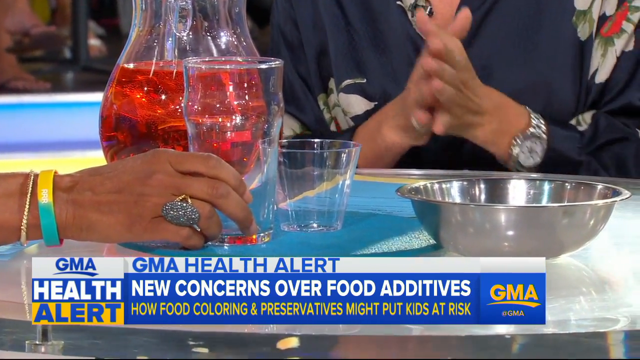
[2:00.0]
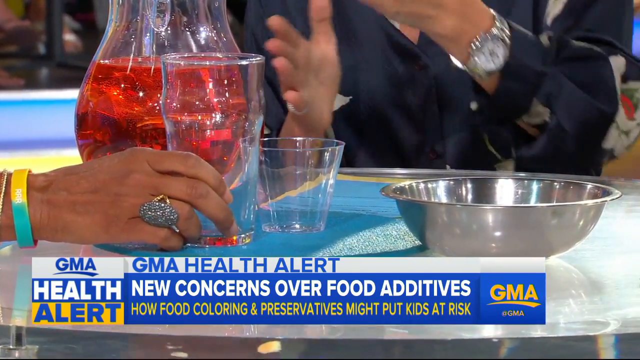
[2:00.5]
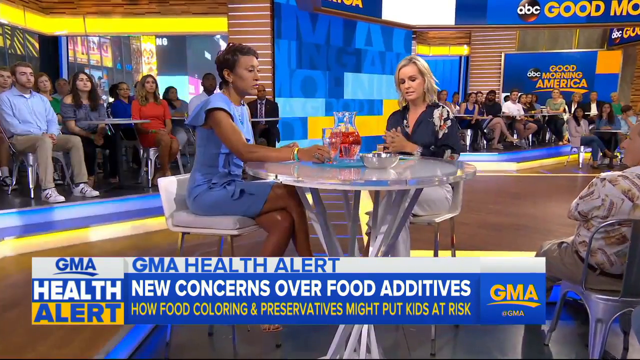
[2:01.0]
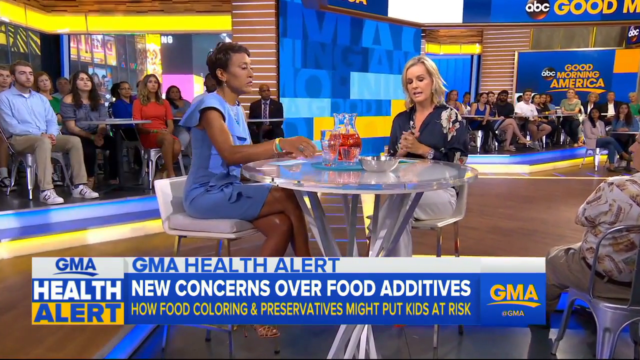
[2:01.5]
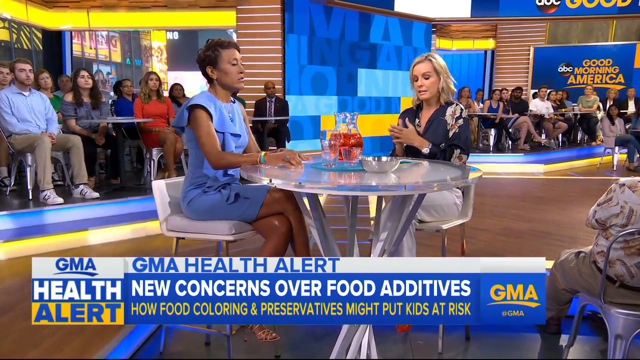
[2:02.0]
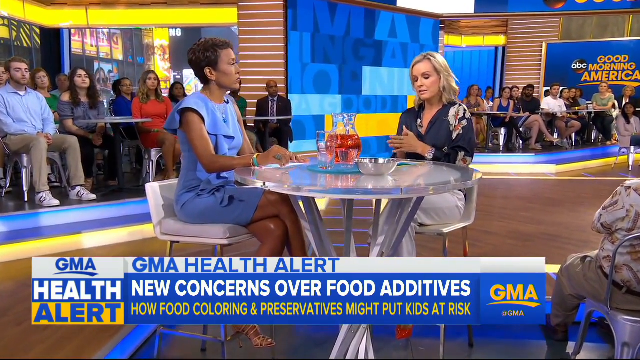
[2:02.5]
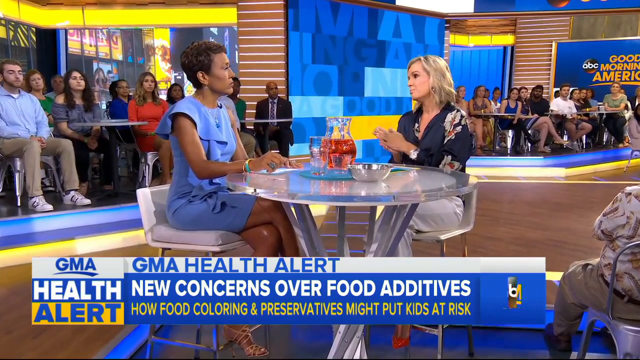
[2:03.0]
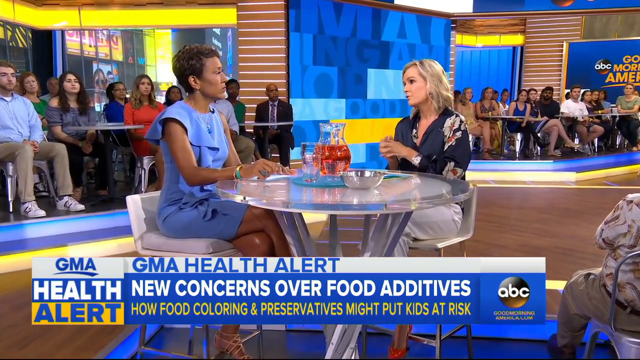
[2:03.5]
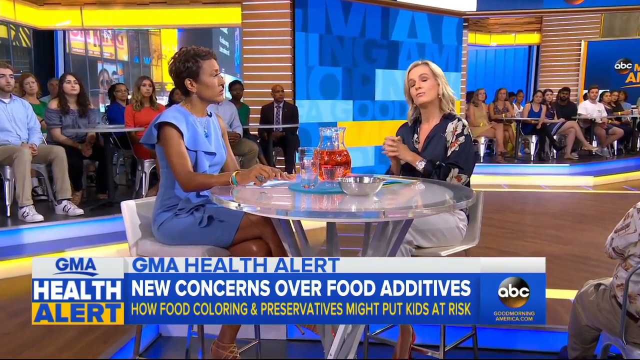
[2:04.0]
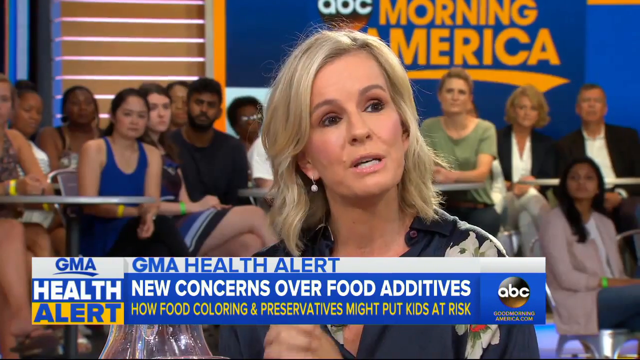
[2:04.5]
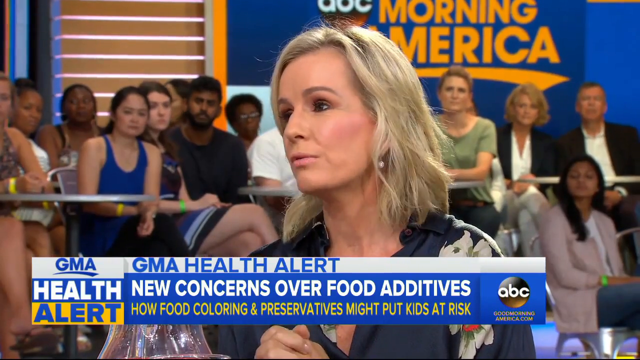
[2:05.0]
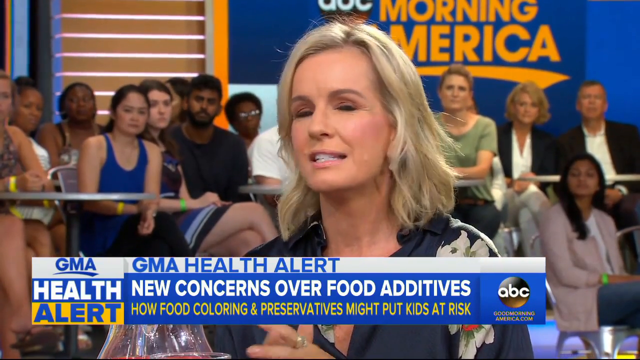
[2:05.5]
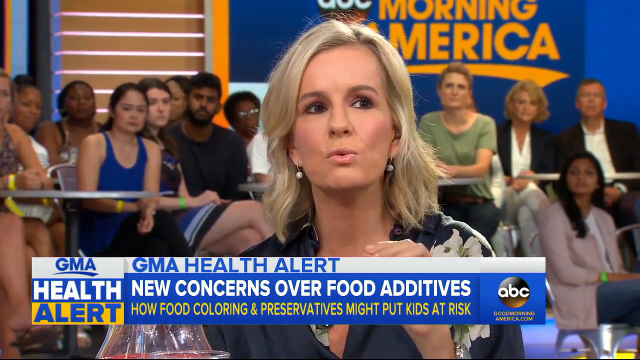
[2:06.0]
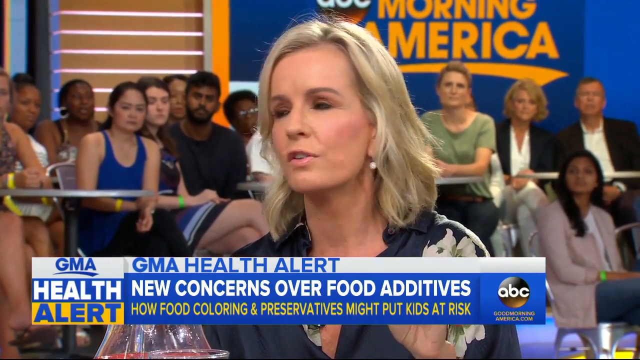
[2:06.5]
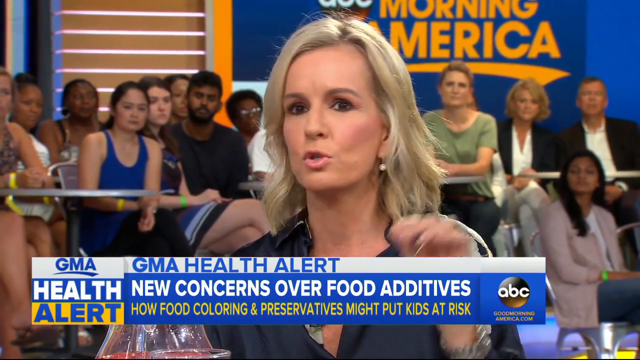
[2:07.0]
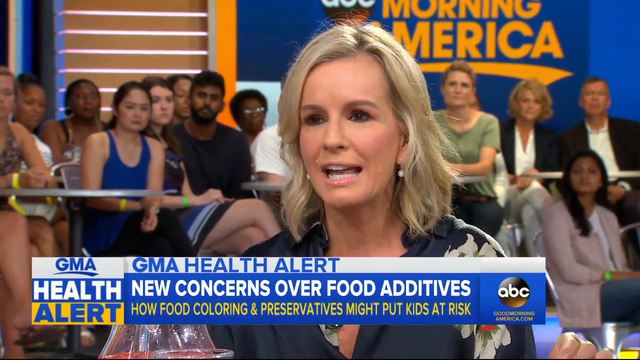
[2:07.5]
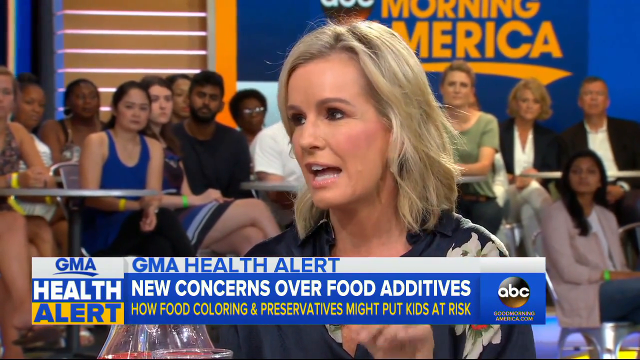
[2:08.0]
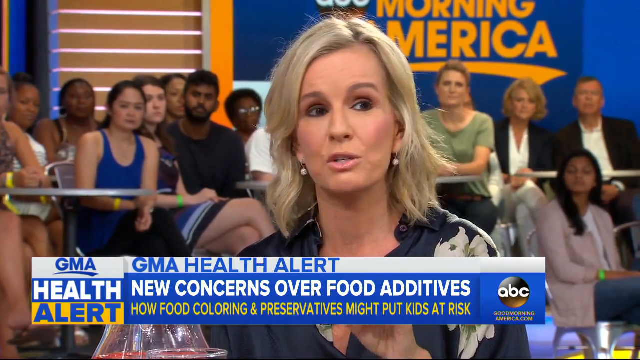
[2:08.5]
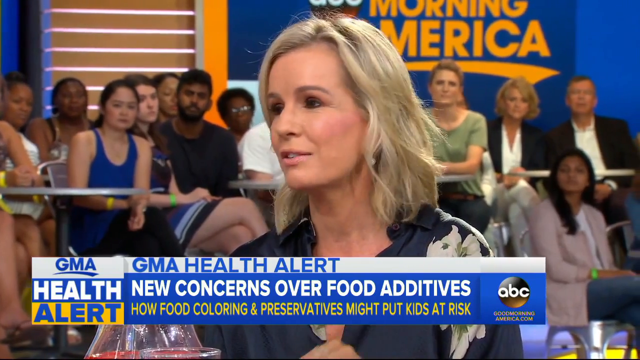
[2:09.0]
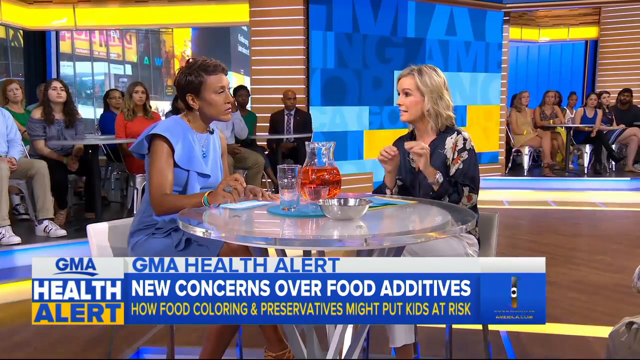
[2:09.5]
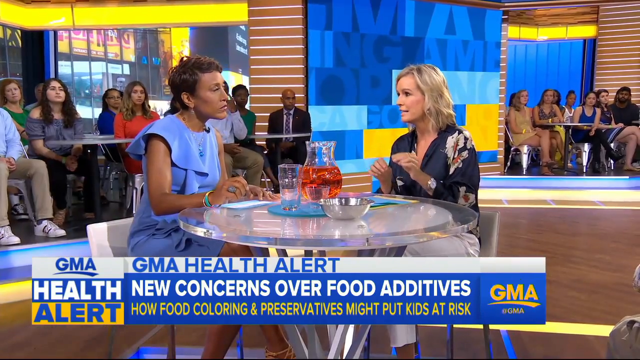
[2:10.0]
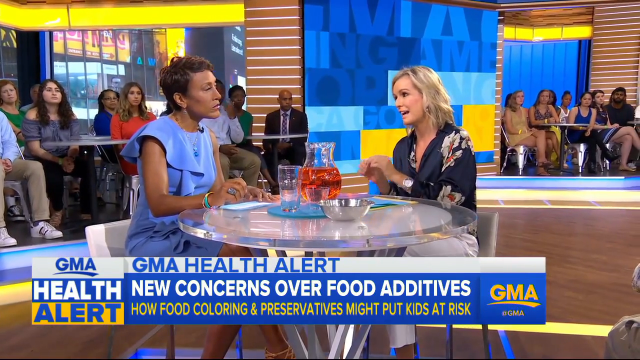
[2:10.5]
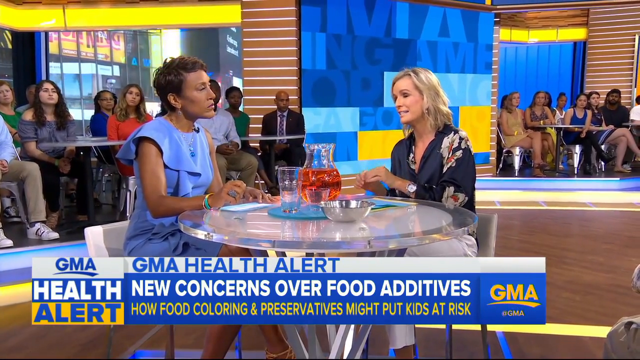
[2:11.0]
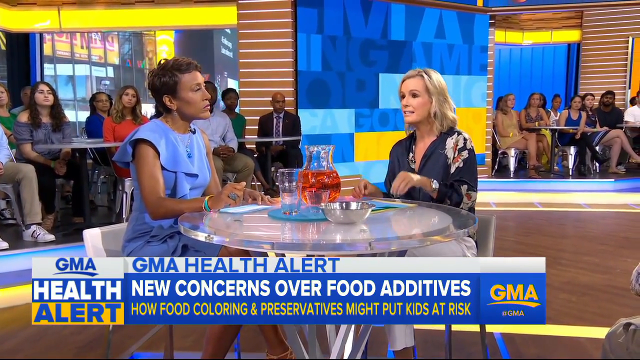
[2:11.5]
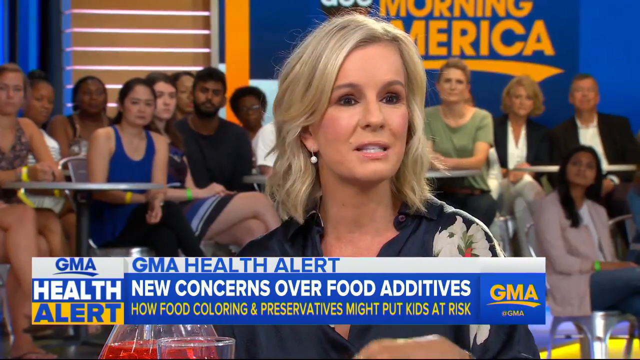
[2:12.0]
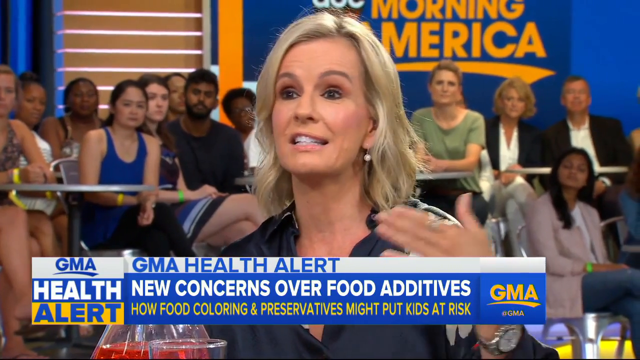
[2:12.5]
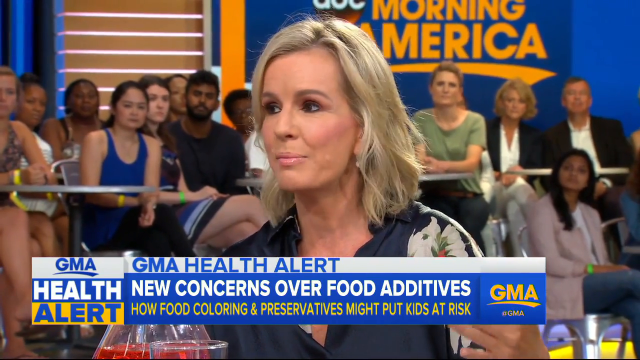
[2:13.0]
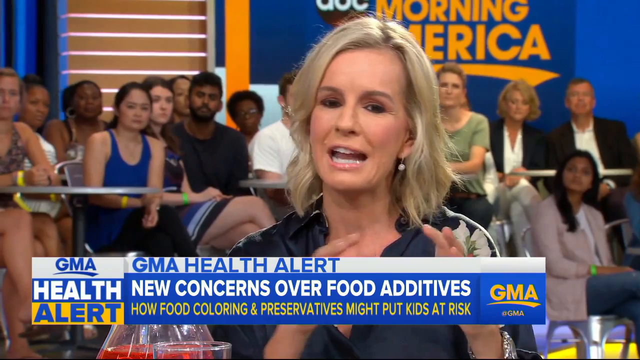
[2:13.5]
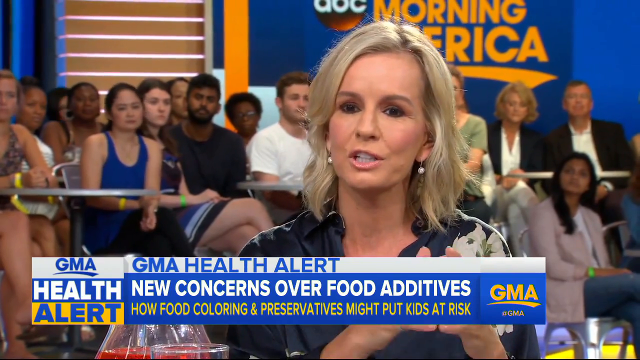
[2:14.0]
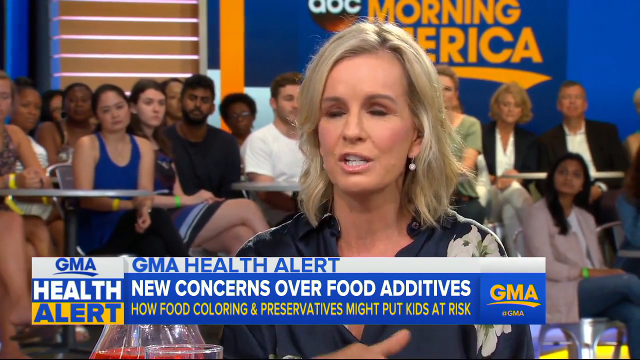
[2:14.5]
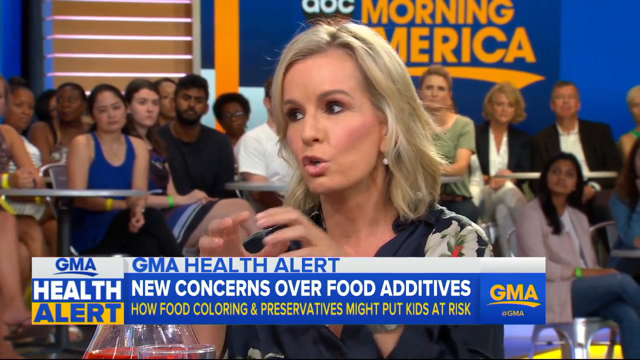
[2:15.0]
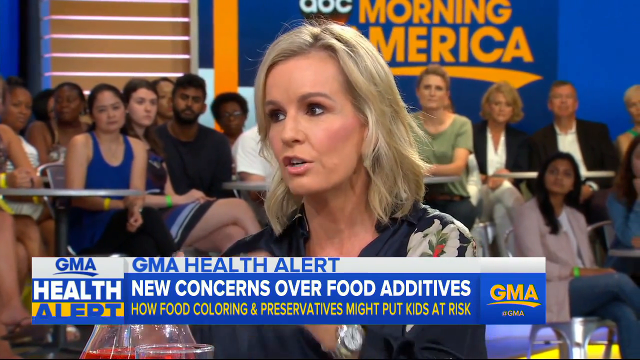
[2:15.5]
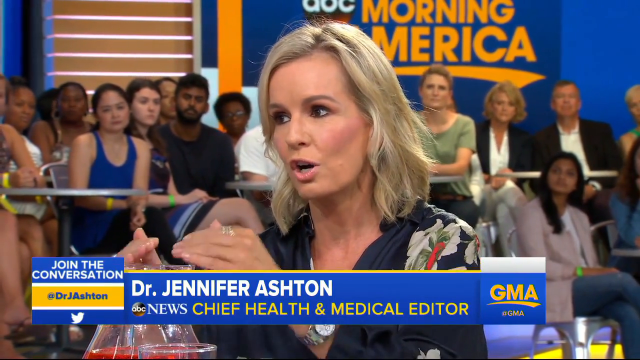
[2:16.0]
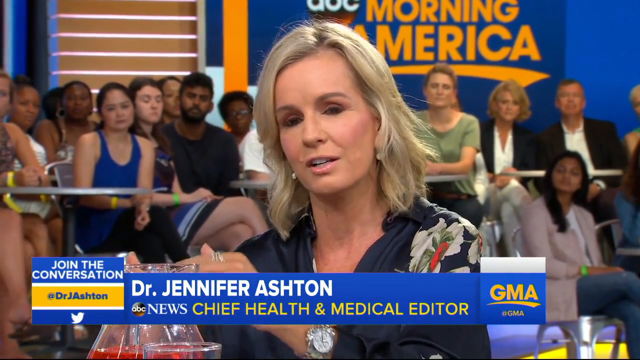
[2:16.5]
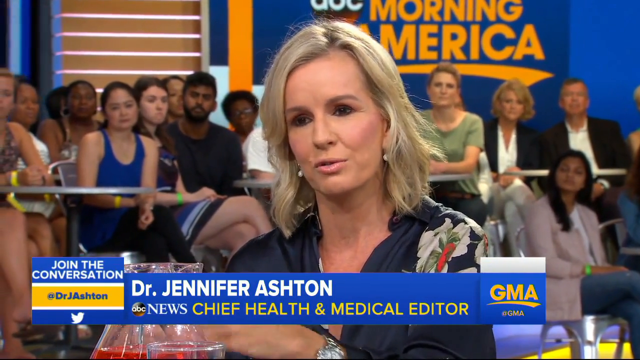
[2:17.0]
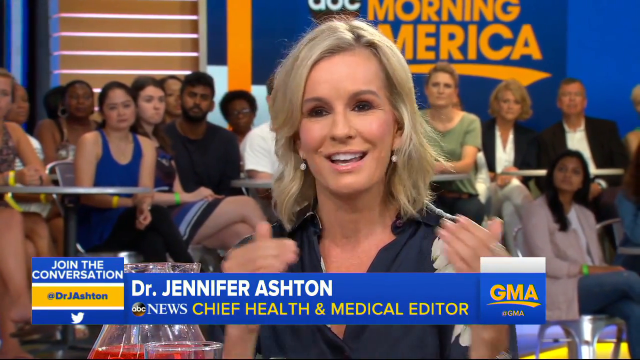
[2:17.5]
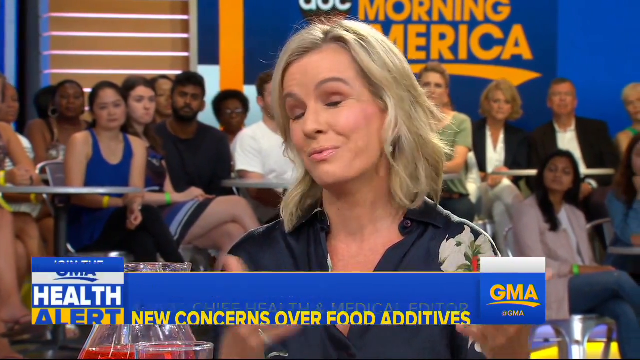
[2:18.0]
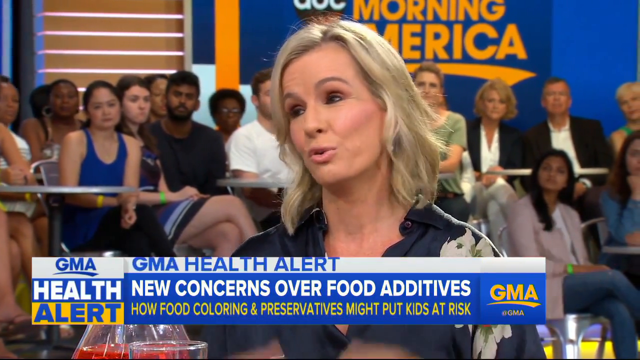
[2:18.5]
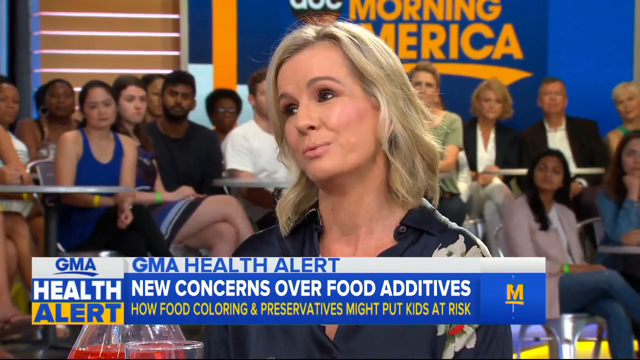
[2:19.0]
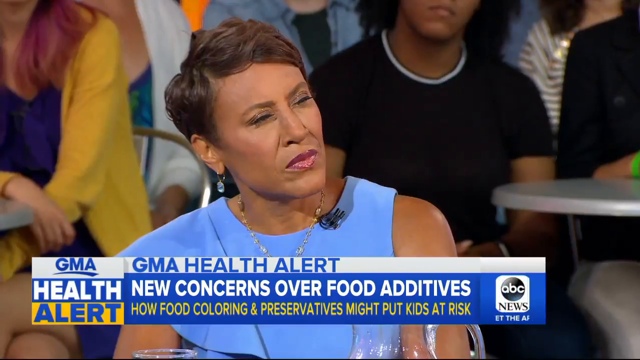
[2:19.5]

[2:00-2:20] A close-up of the table zooms slightly closer into the silver bowl and then pans back out to the two women talking at the table. The video cuts between shots of both of them at the table with the background and close-ups of Dr Jennifer Ashton. The people in the background seem to be listening intently, as does the interviewer. The bottom of the screen says "GMA Health Alert" and then shows the guest's name again: "Dr Jennifer Ashton, ABC News Chief Health and Medical Editor." A sign at the side says "join the conversation" with a Twitter handle, Dr J Ashton, and a picture of the Twitter bird underneath it. The shot closes on a close-up of the interviewer, who wears a blue dress with a ruffle at the top; both women are sat on stools.